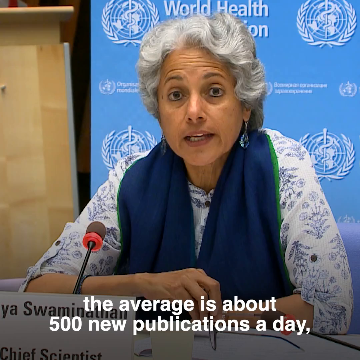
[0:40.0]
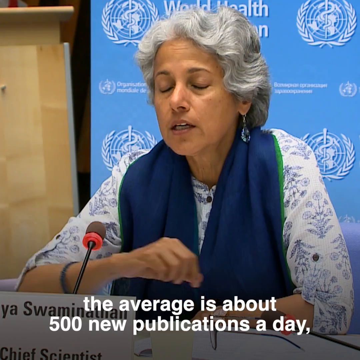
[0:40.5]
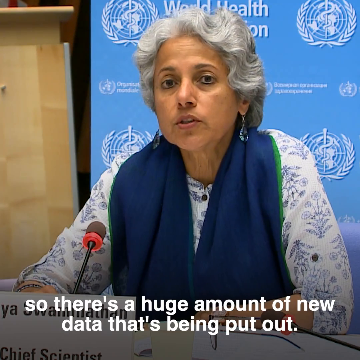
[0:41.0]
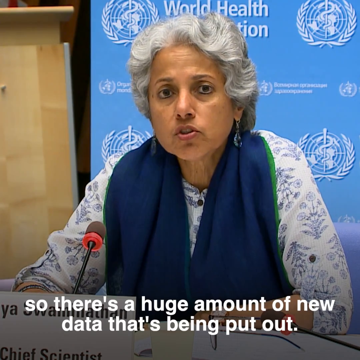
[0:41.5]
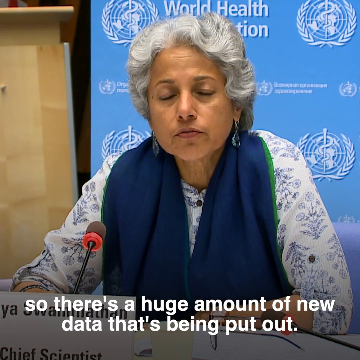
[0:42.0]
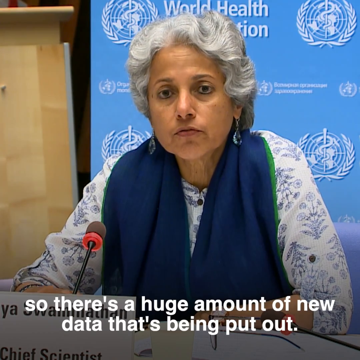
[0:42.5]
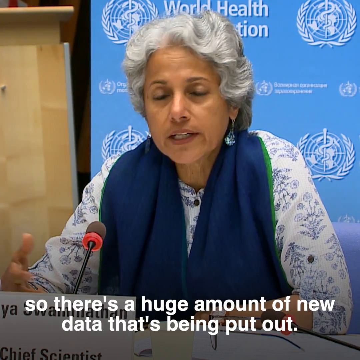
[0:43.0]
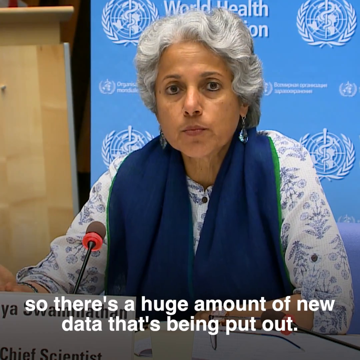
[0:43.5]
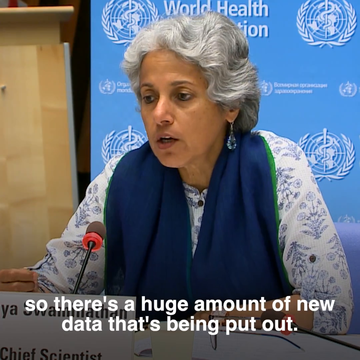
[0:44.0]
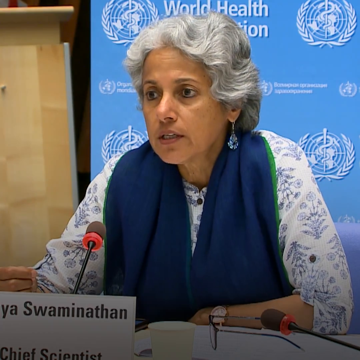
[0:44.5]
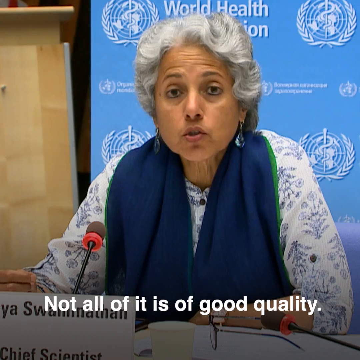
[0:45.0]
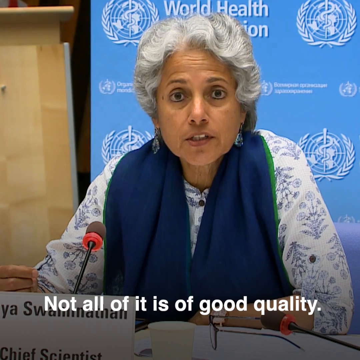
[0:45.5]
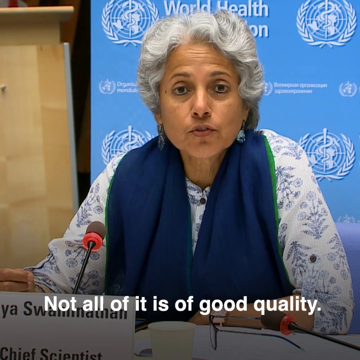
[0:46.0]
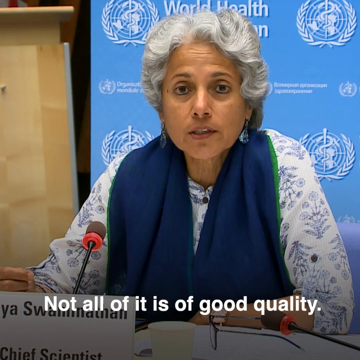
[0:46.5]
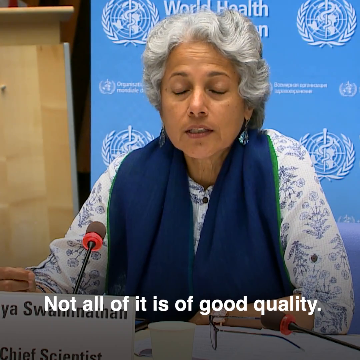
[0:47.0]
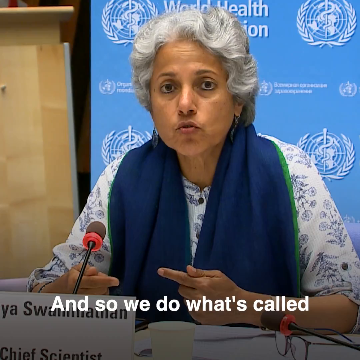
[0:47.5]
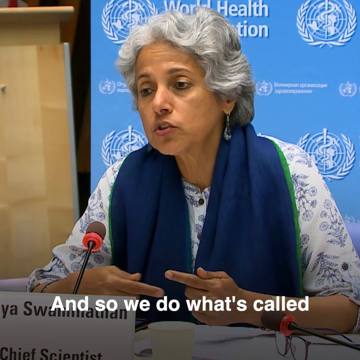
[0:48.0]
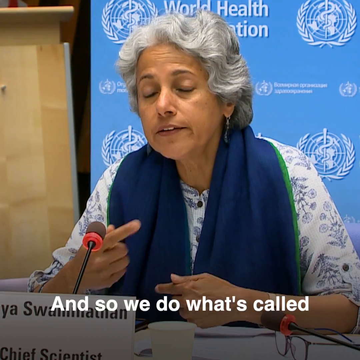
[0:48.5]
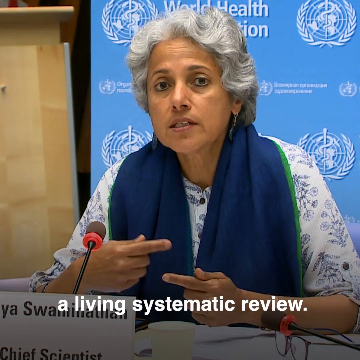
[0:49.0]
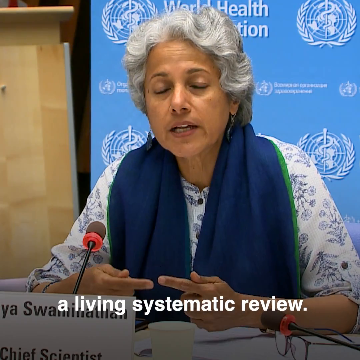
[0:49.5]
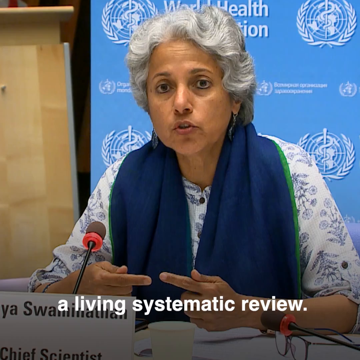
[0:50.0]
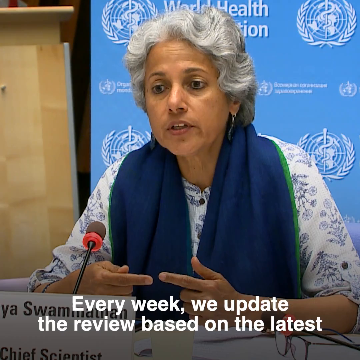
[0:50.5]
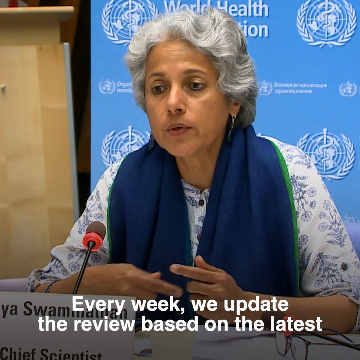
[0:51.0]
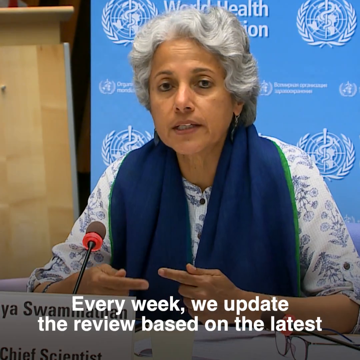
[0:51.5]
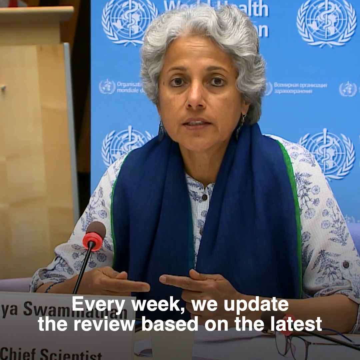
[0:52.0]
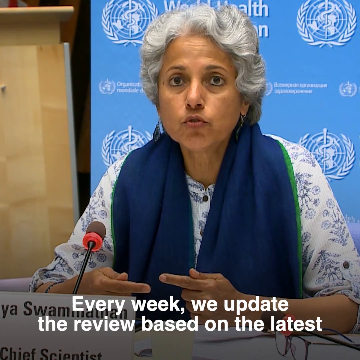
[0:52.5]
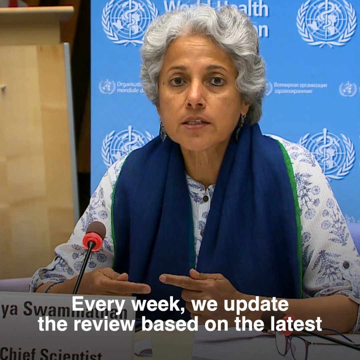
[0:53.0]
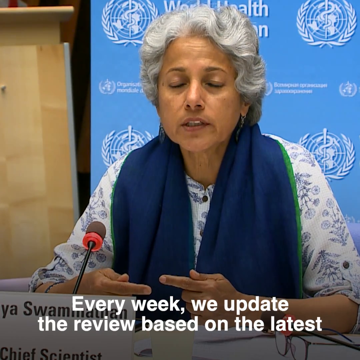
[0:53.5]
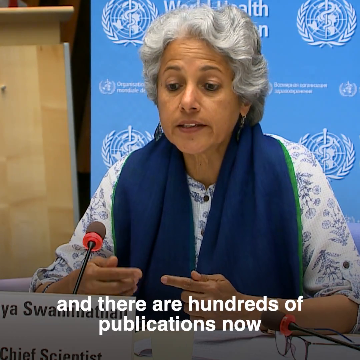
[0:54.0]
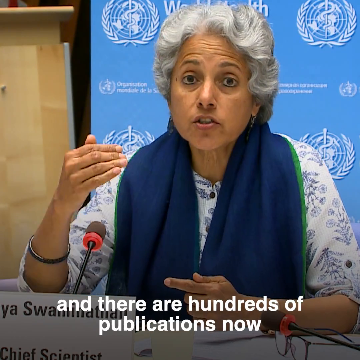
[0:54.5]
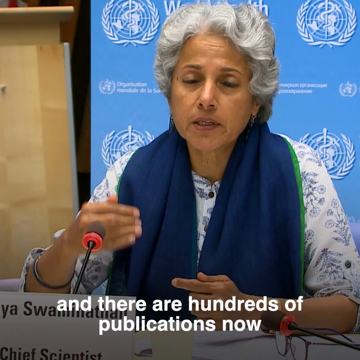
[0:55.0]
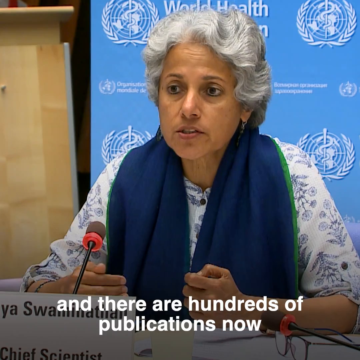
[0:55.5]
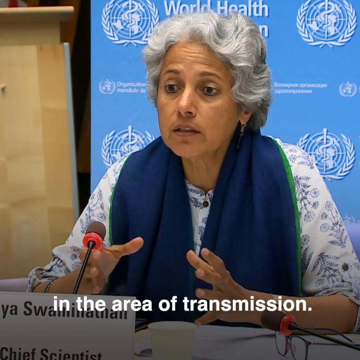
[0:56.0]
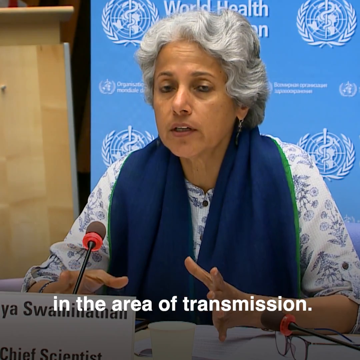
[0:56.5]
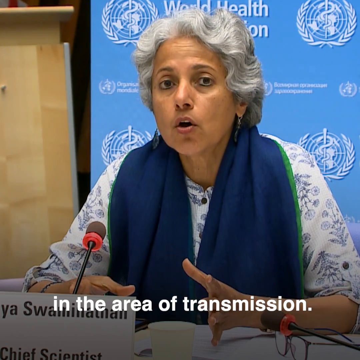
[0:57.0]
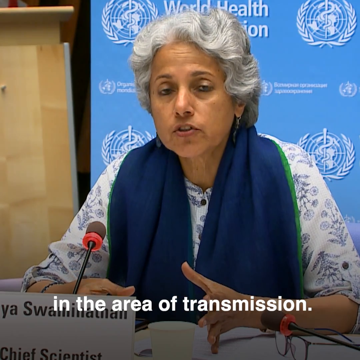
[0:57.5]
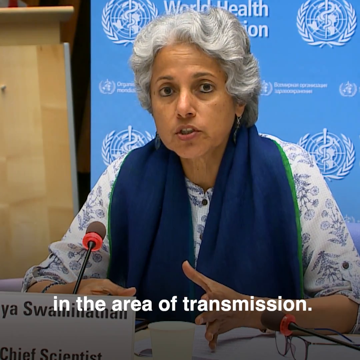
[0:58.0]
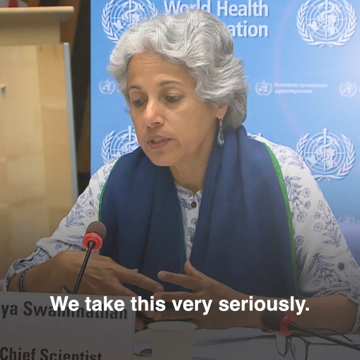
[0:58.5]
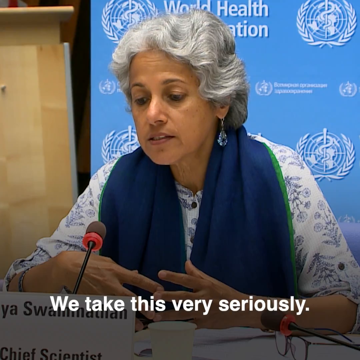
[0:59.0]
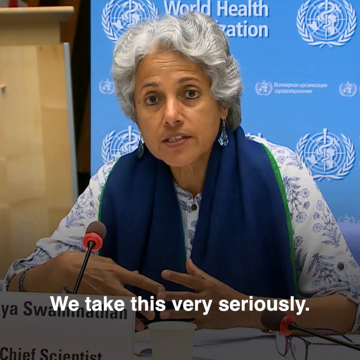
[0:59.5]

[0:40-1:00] Ms. Swaminathan is still speaking, with a concerned look on her face. She speaks into the microphone ahead of her, gesturing with her right hand, and she has a watch on her left hand. She begins to gesture with both hands. She says "every week we update the review based on the latest" and that "there are hundreds of publications now in the area of transmission," then goes on to say "we take this very seriously." The microphone in front of her is largely black, but underneath its foam tip there is a red ring that goes around the microphone. Behind her is the light blue backdrop with the white text and white logo of the World Health Organization.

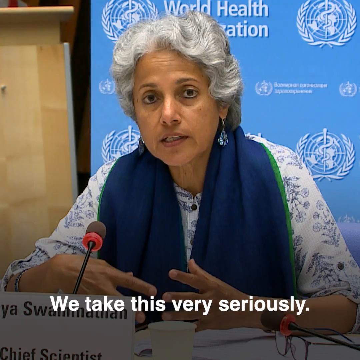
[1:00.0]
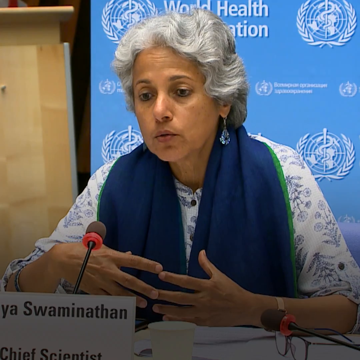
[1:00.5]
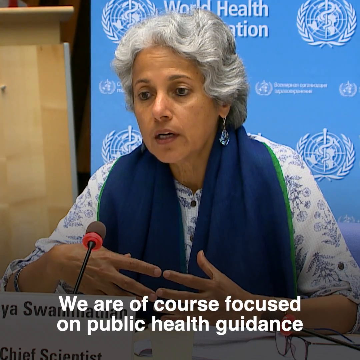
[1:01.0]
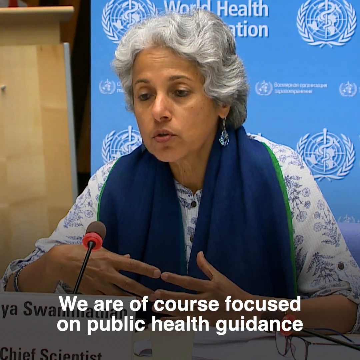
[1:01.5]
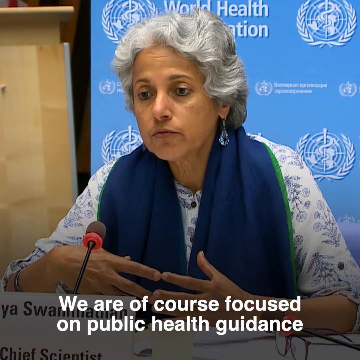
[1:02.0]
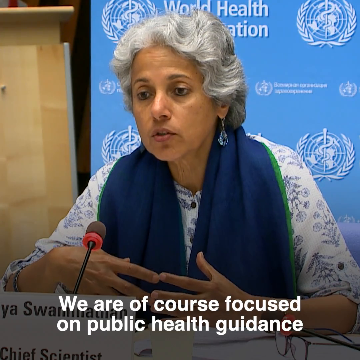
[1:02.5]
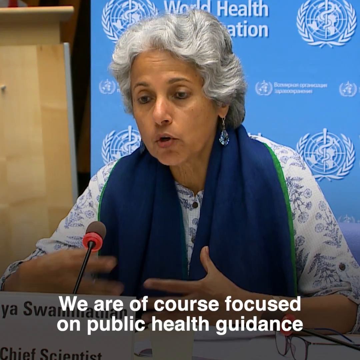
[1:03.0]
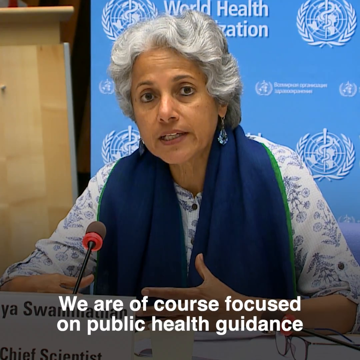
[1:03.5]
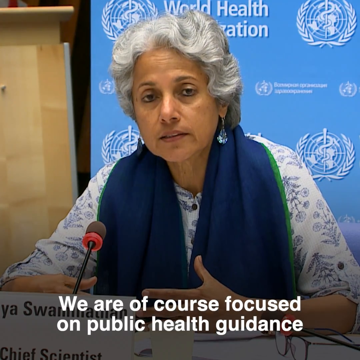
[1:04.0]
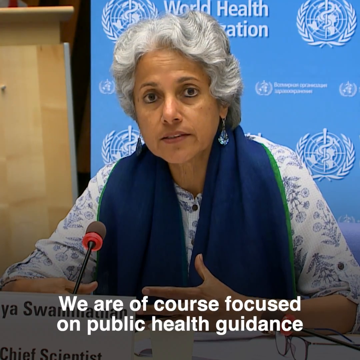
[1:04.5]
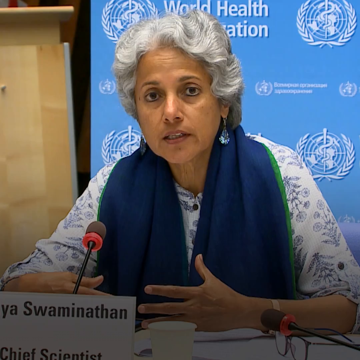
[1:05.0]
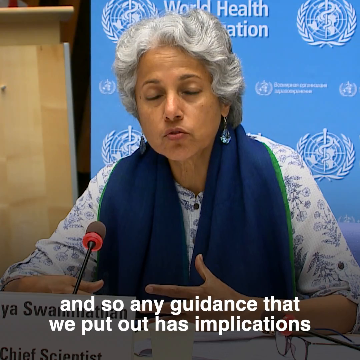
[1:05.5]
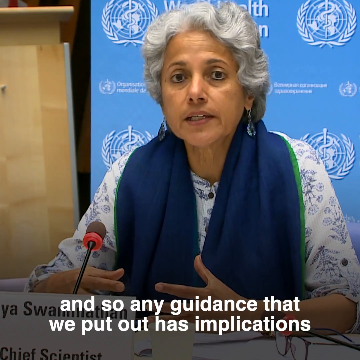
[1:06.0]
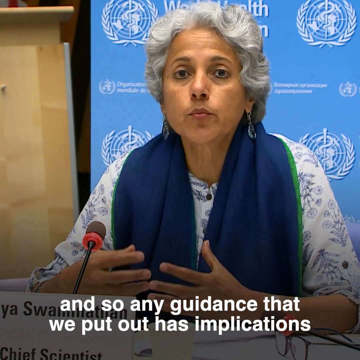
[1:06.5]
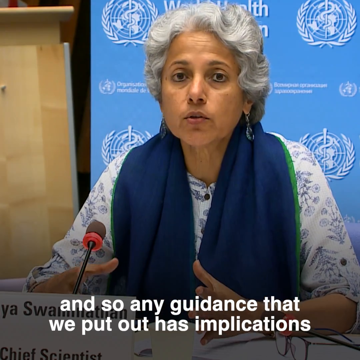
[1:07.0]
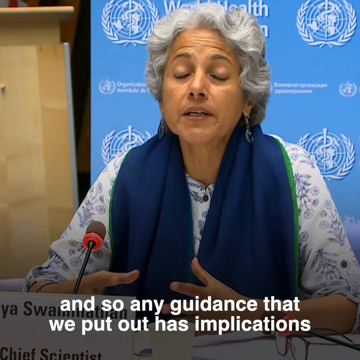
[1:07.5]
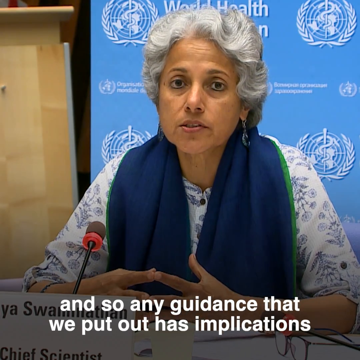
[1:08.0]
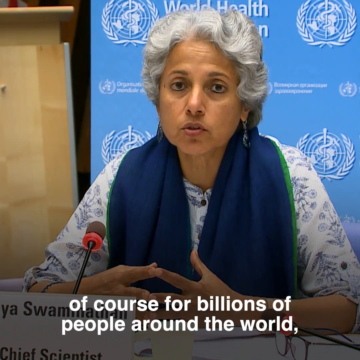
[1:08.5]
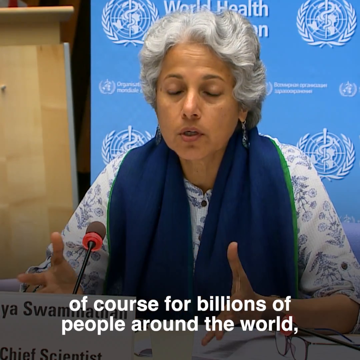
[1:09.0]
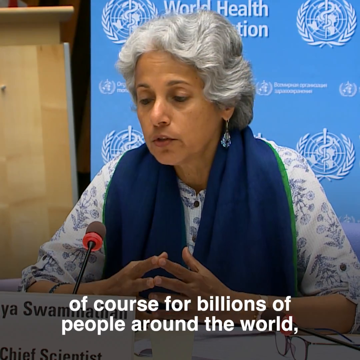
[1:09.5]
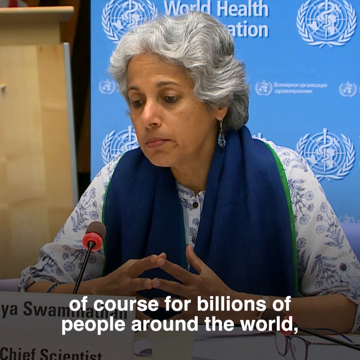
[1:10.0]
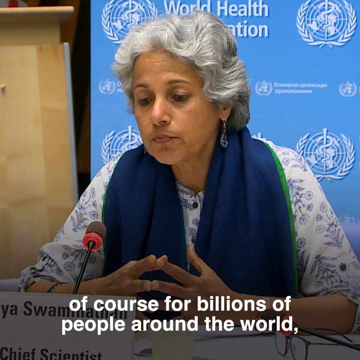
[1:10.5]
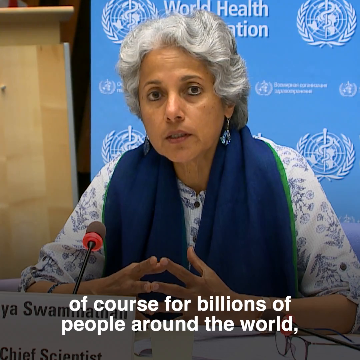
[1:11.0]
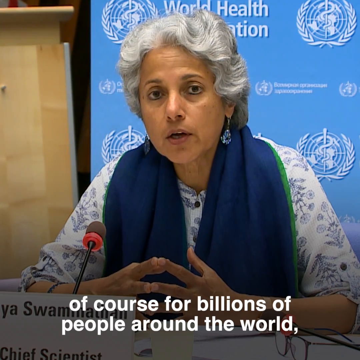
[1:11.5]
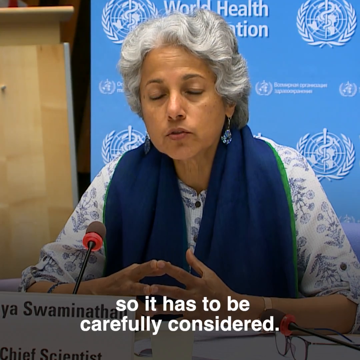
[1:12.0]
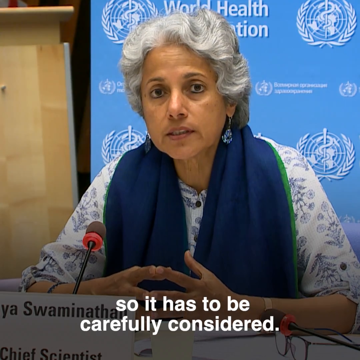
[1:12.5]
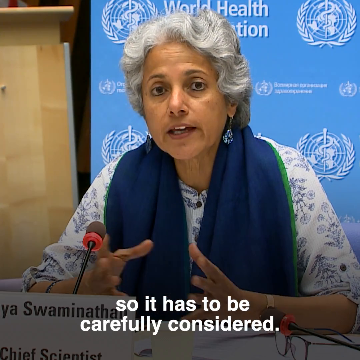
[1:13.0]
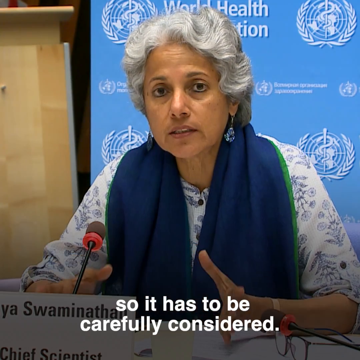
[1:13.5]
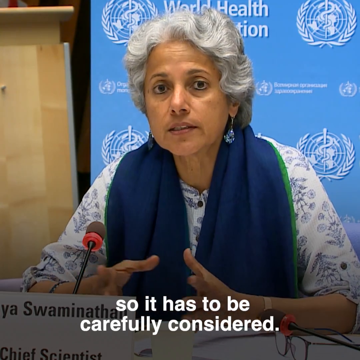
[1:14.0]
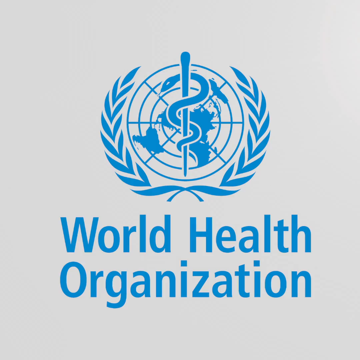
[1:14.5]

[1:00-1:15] Ms. Swaminathan of the World Health Organization is saying "we take this very seriously," which appears as white text at the bottom of the screen. She goes on gesturing and says, "we are, of course, focused on public health guidance," adding that any guidance they put out has implications for billions of people around the world, so it has to be carefully considered. The video then concludes with an image that says "World Health Organization" on a white background, with the logo and text all in the same light blue color. The World Health Organization logo shows a globe surrounded on both sides by a wreath, with a staff with a snake wrapped around it in the center of the globe.